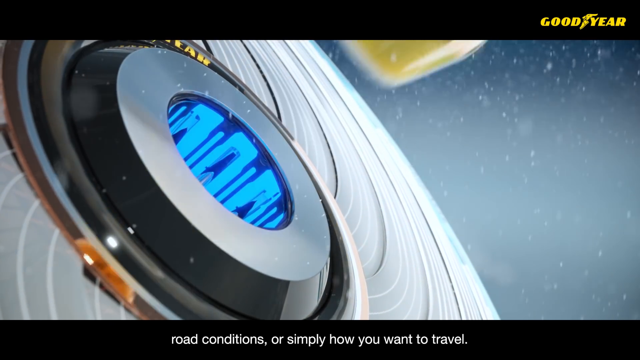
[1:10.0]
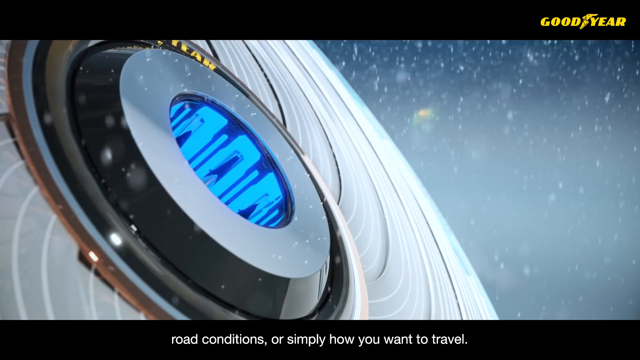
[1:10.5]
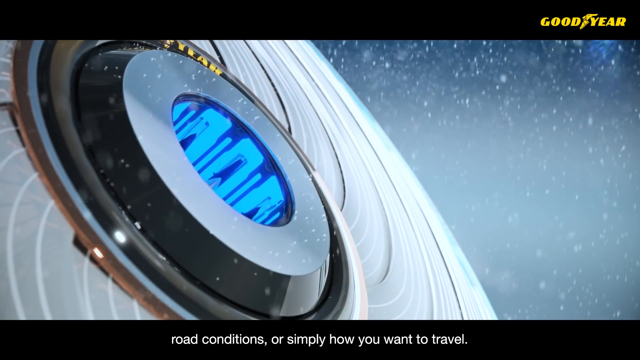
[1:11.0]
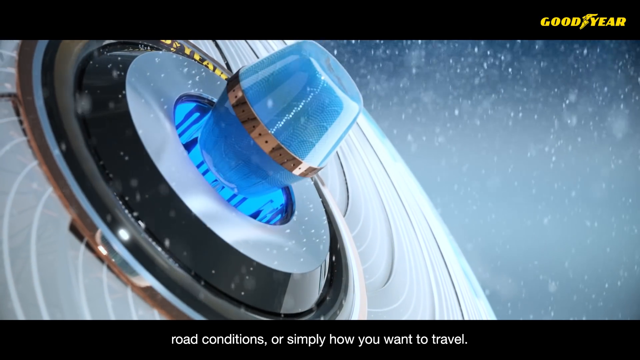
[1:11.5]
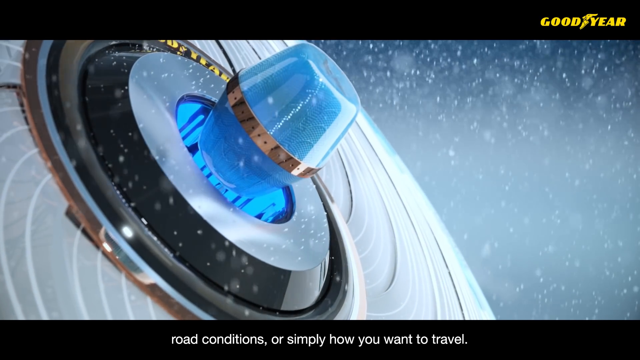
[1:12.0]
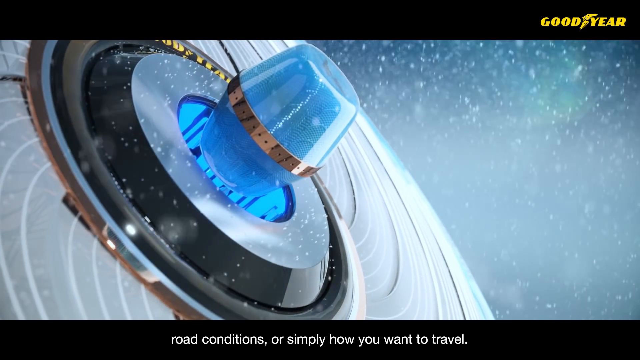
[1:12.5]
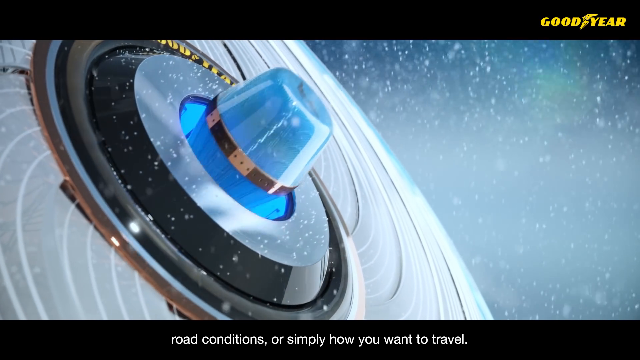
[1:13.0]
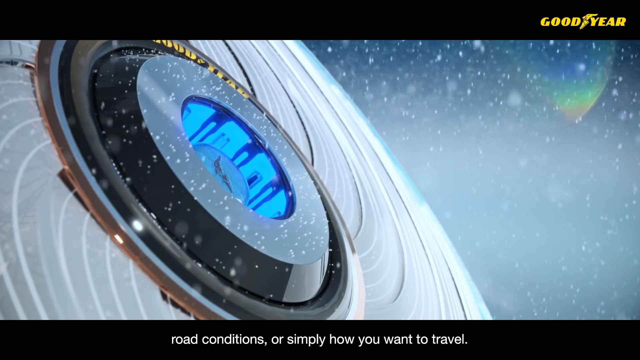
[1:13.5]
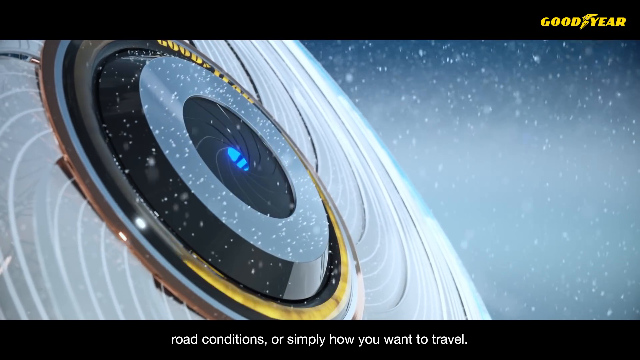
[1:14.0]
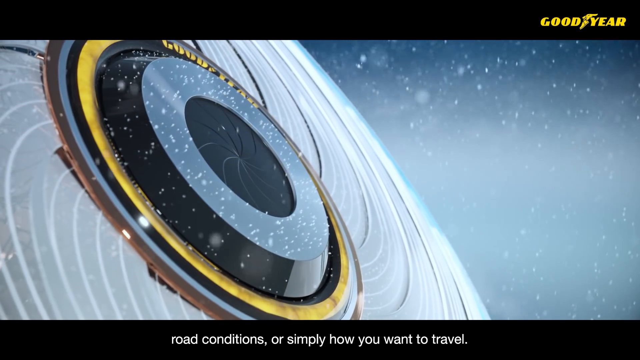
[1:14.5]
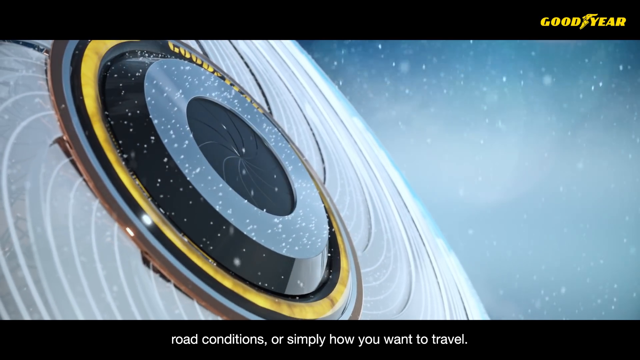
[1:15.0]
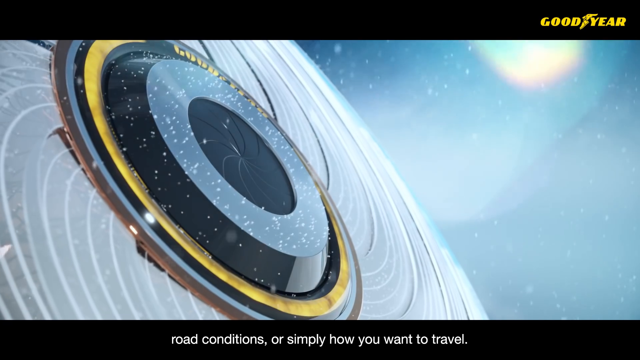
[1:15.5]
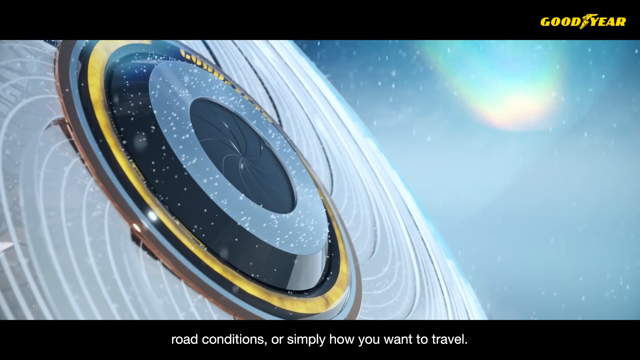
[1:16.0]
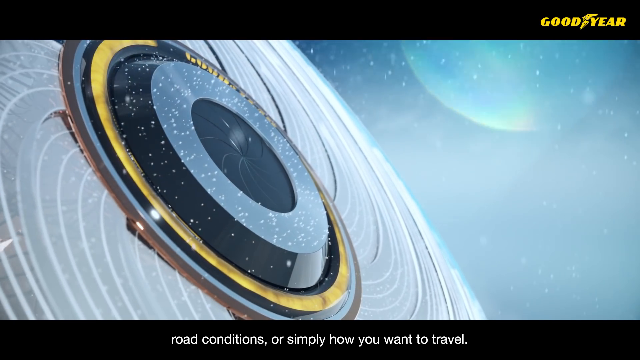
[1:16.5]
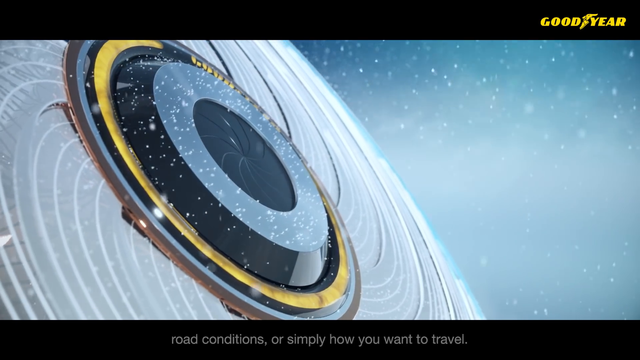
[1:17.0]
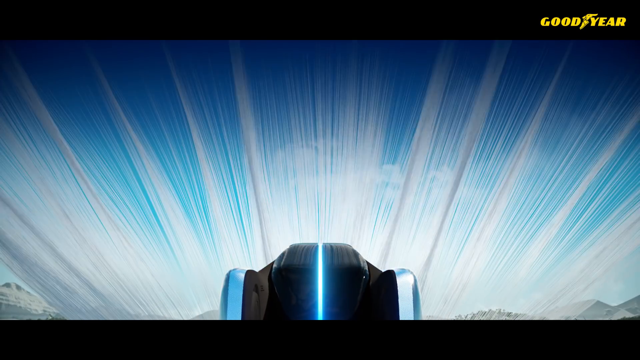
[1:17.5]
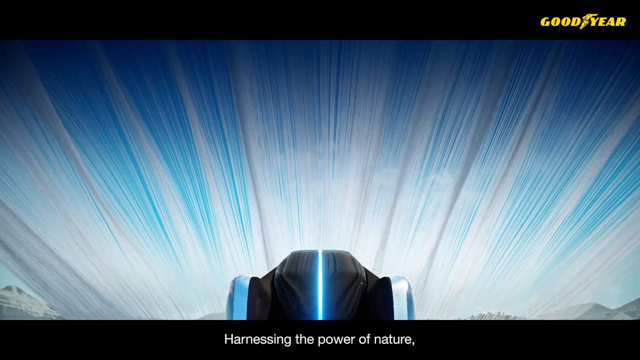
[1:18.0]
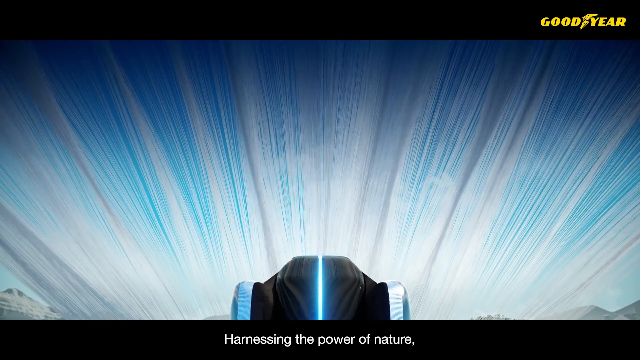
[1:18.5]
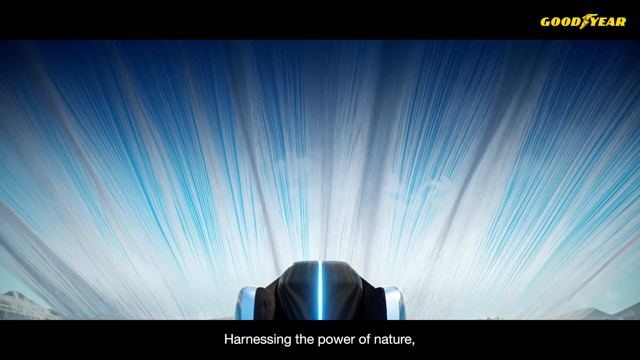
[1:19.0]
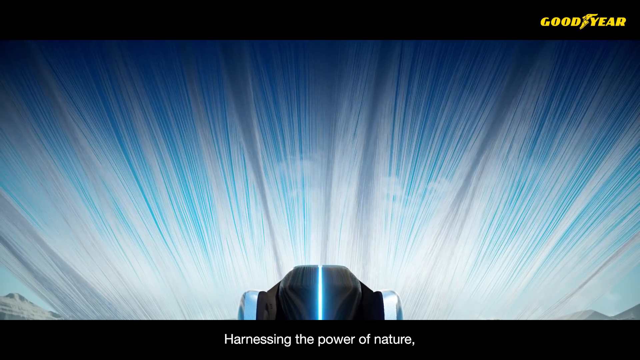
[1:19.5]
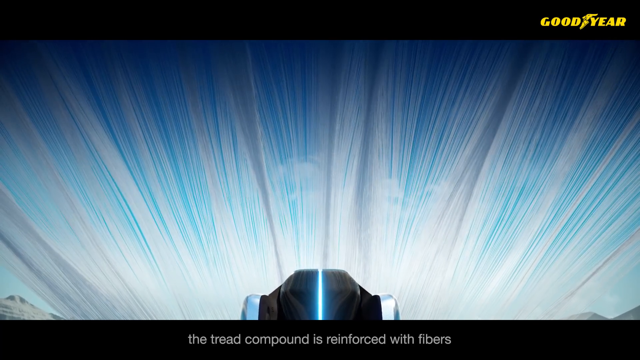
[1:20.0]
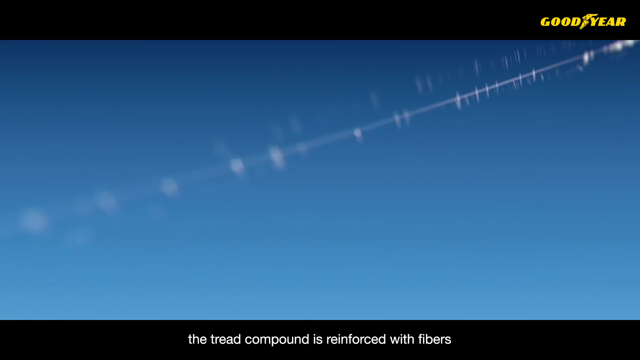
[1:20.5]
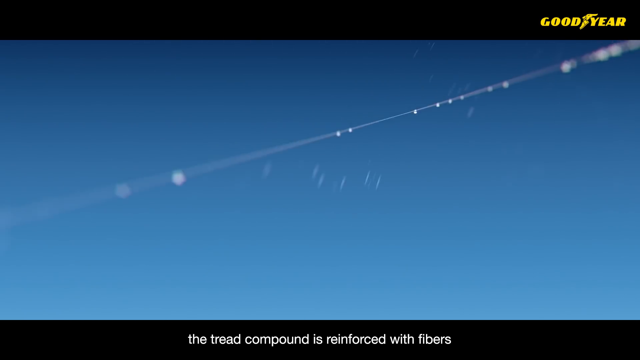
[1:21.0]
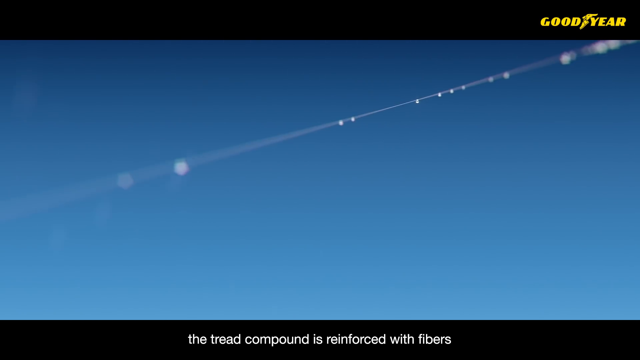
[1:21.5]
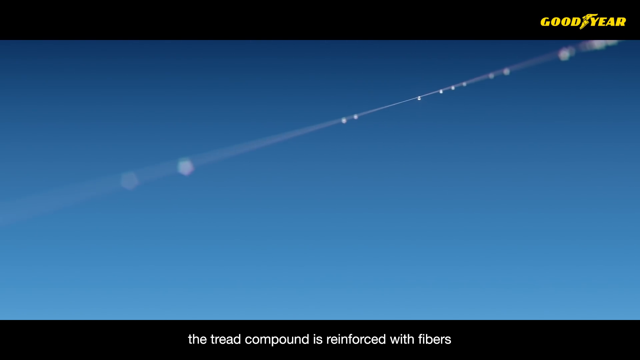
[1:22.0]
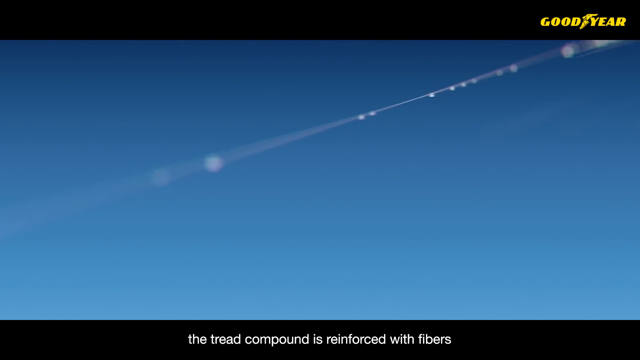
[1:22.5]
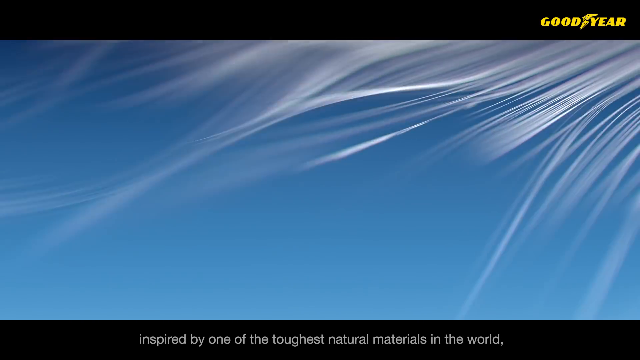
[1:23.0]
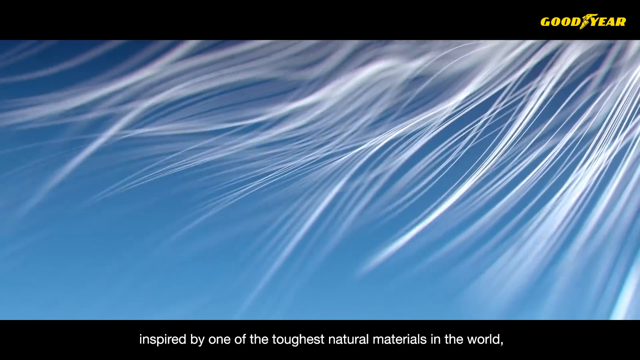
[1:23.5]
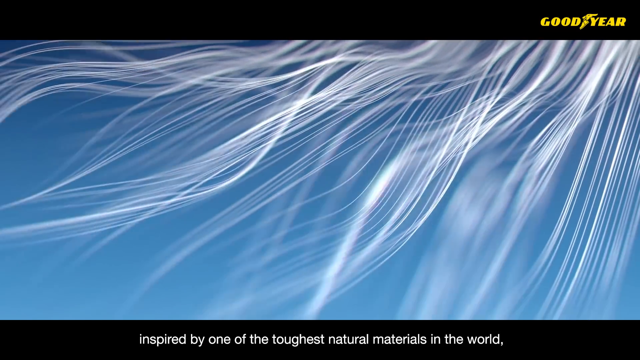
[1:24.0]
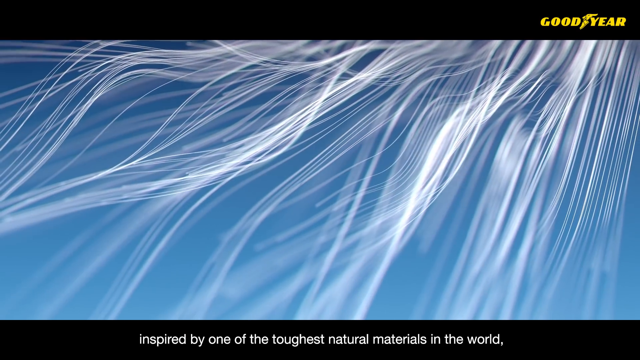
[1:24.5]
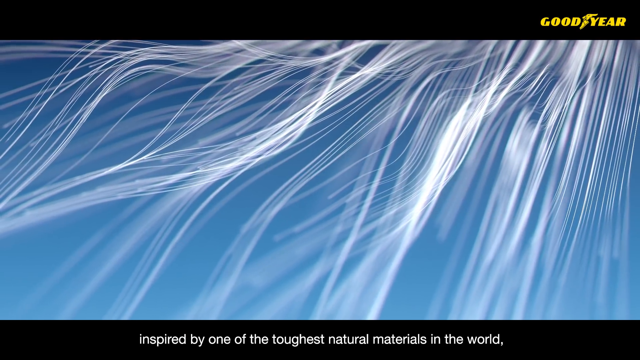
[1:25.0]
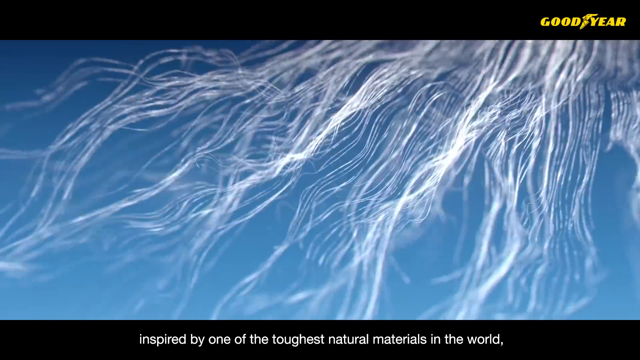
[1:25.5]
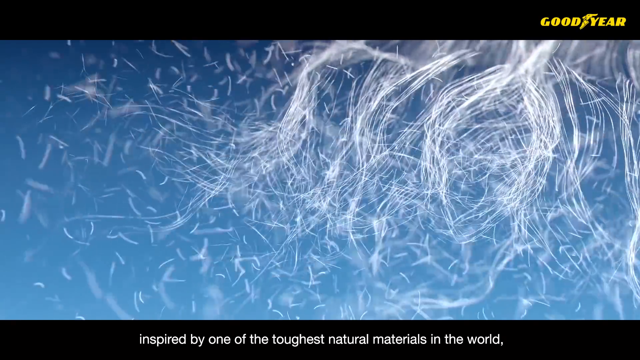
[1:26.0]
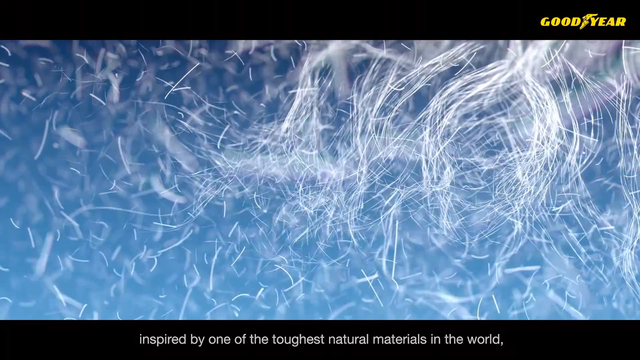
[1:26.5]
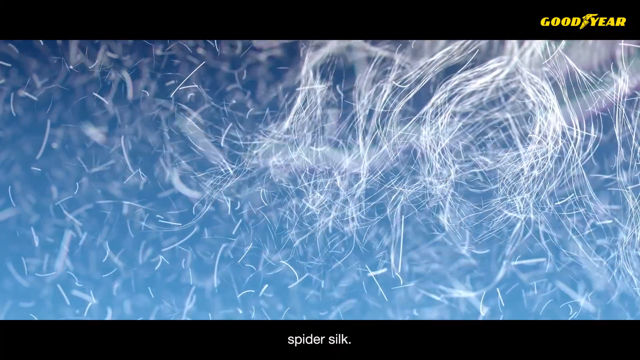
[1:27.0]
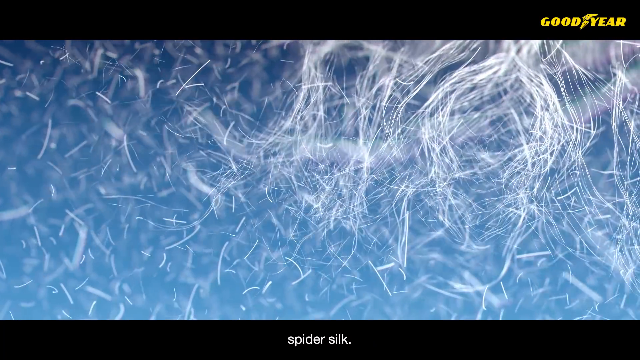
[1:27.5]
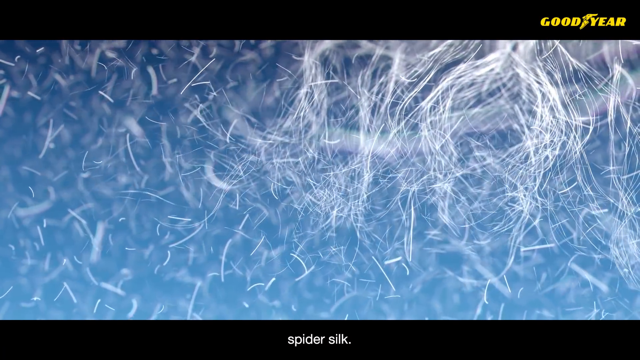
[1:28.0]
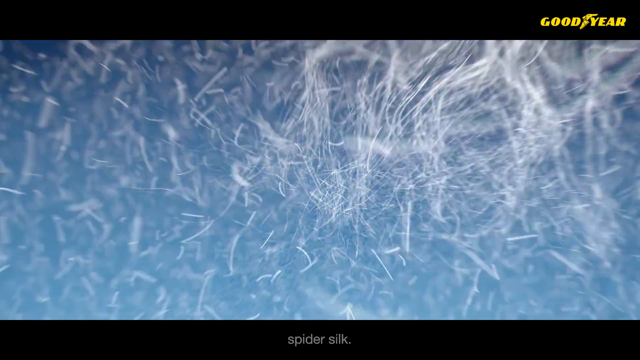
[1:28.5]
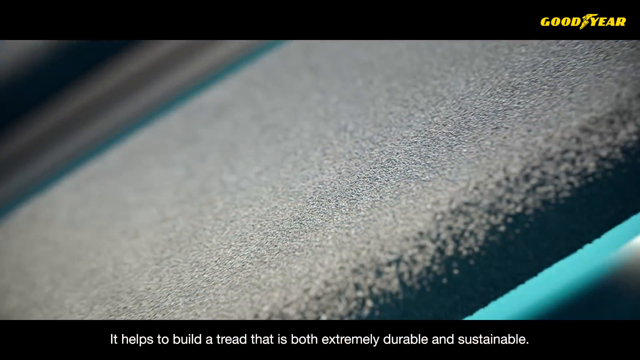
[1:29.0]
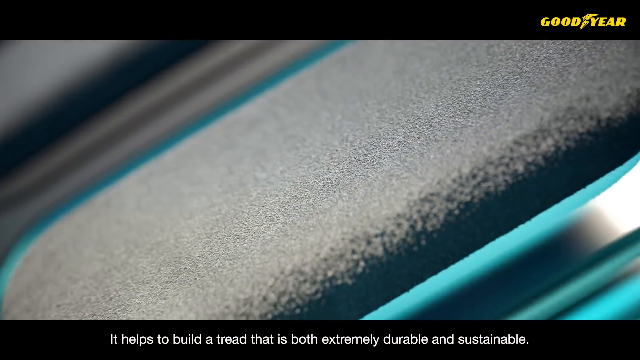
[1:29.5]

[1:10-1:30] The focus stays on the individual tire and its tread. An image shows strands puffing off the tire that look like hair but are spider silk, the material making up the tread. Early on, small specks appear, possibly rain or possibly small pieces of the tread. In one scene the car drives somewhat away from the camera, and an illuminating light comes off the car and rises up into the sky seemingly endlessly. On-screen text mentions "harnessing the power of nature."